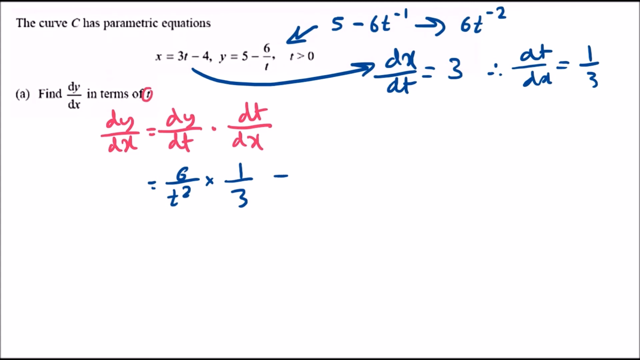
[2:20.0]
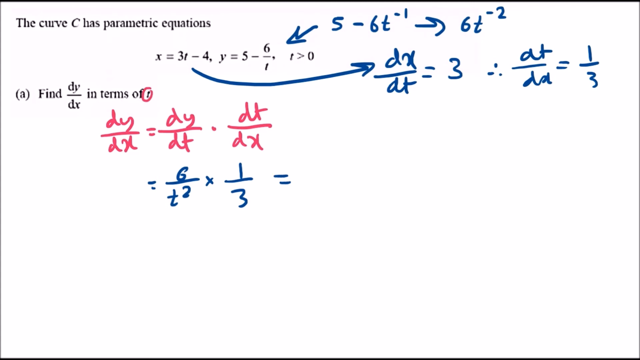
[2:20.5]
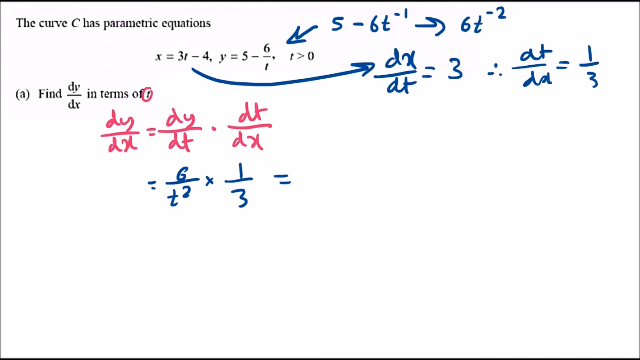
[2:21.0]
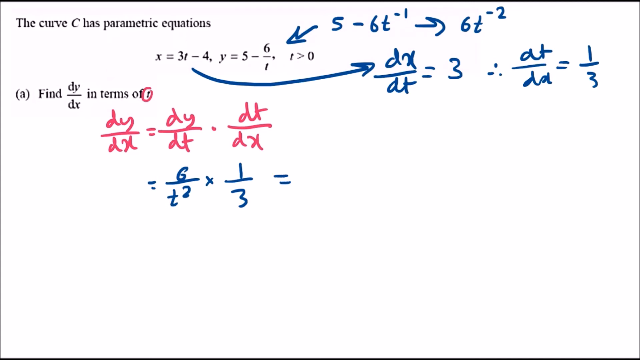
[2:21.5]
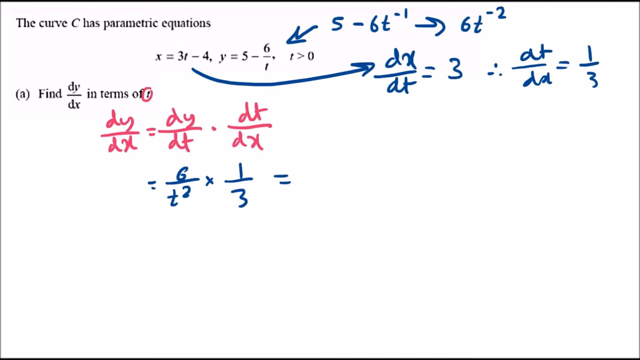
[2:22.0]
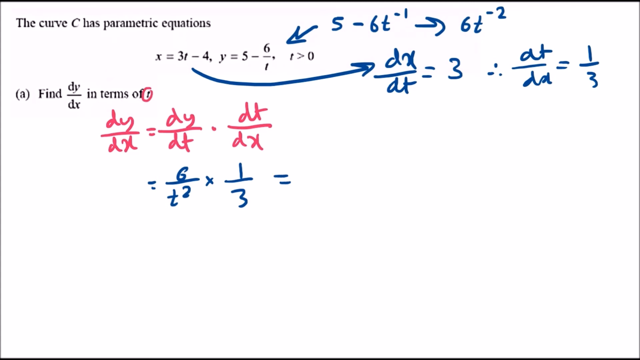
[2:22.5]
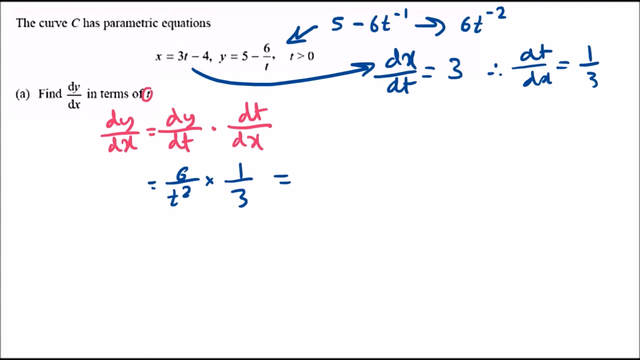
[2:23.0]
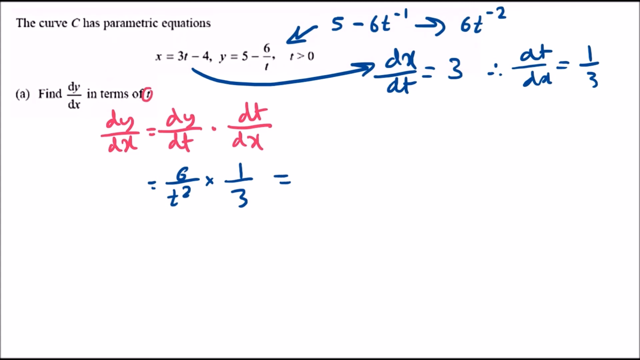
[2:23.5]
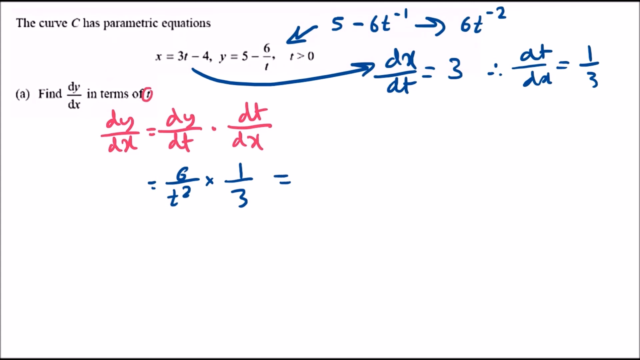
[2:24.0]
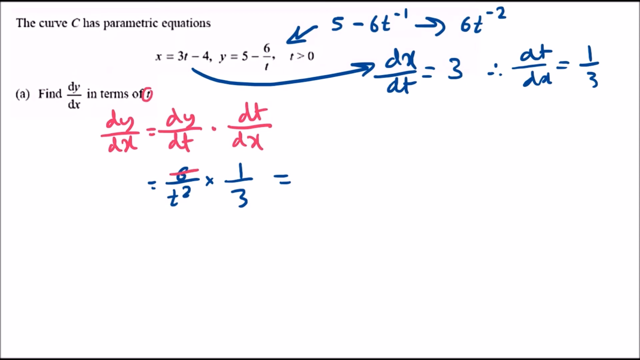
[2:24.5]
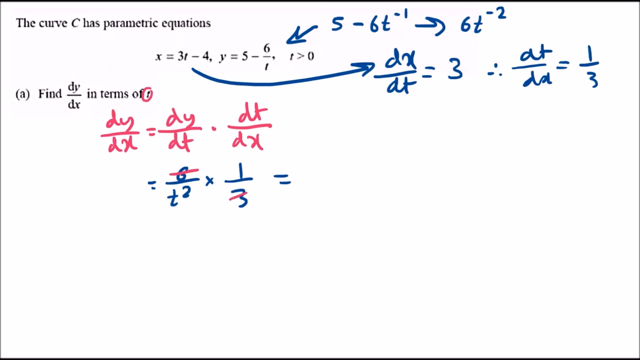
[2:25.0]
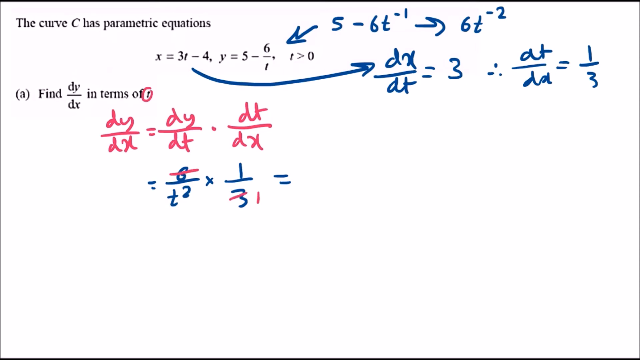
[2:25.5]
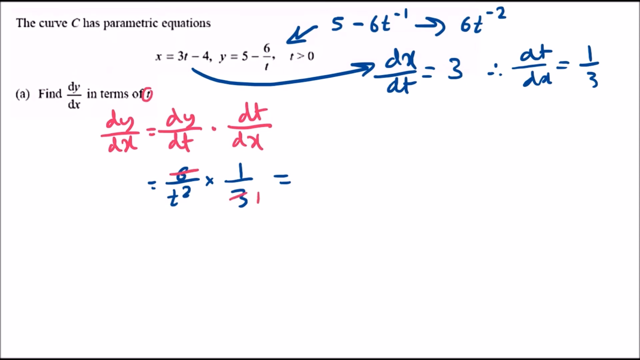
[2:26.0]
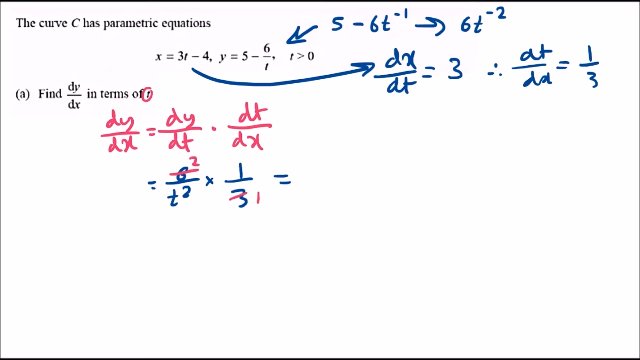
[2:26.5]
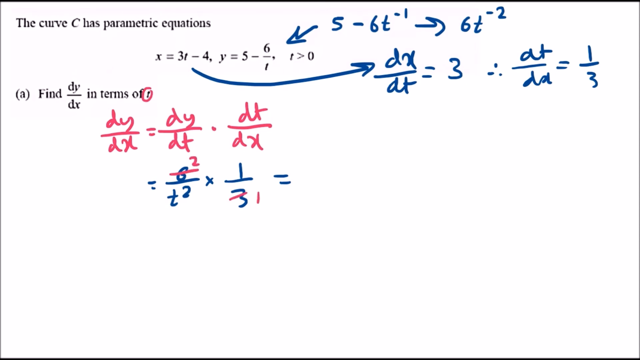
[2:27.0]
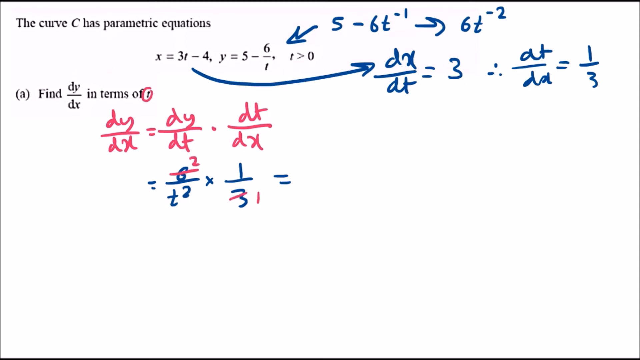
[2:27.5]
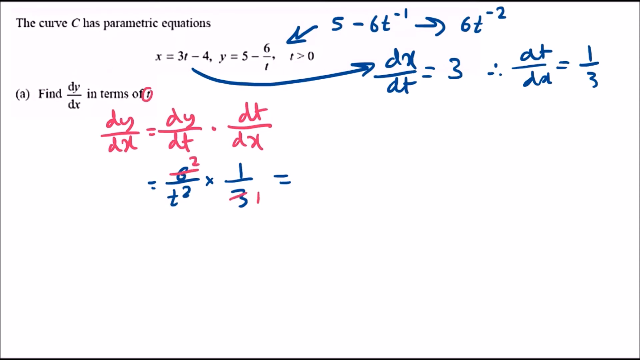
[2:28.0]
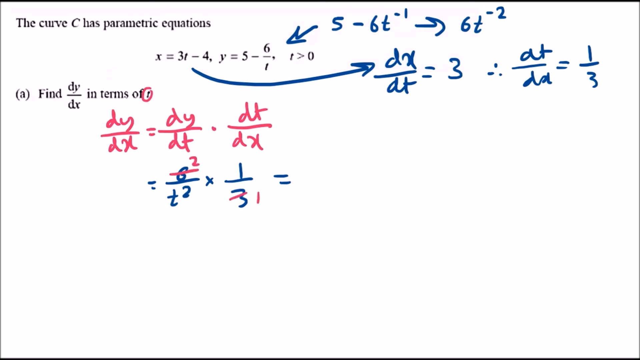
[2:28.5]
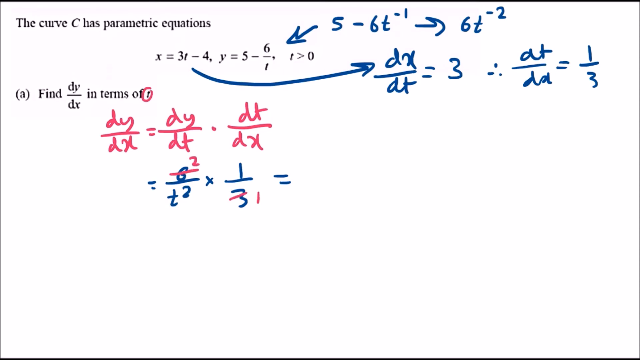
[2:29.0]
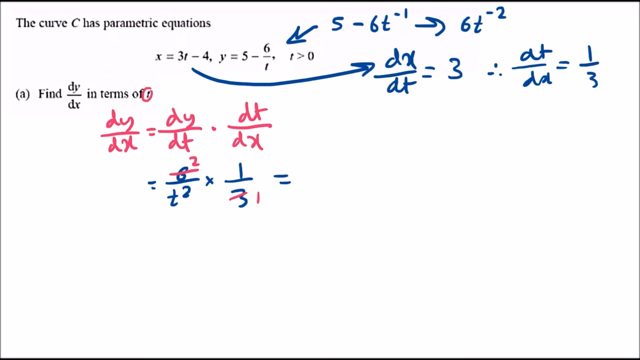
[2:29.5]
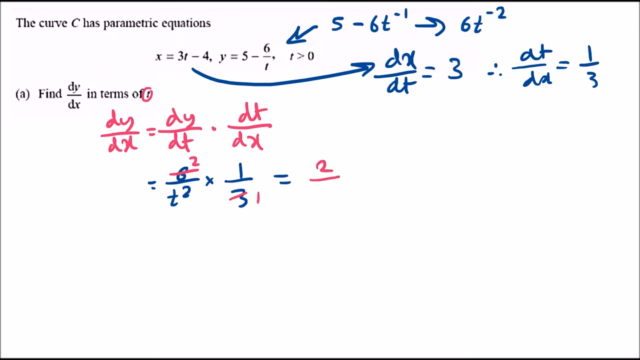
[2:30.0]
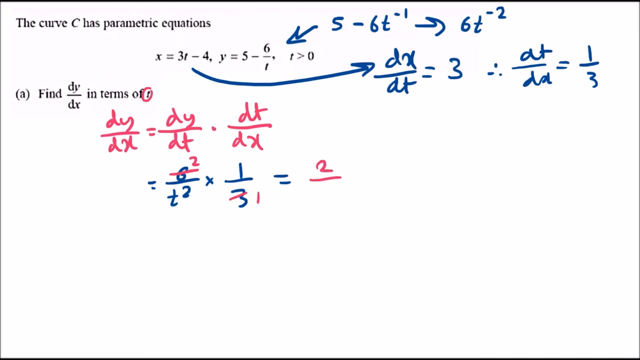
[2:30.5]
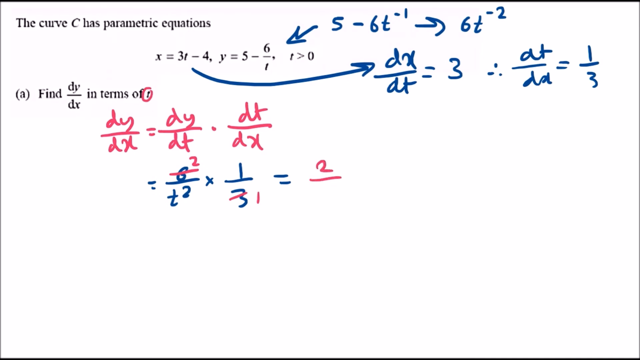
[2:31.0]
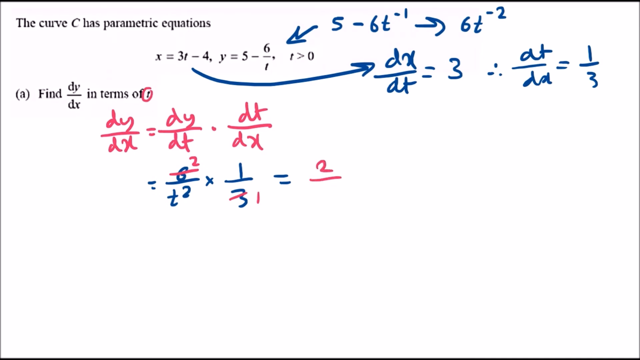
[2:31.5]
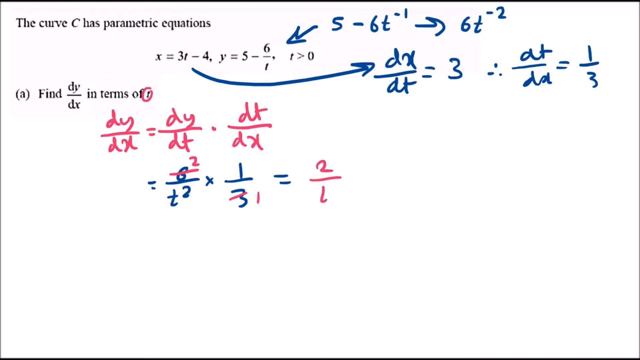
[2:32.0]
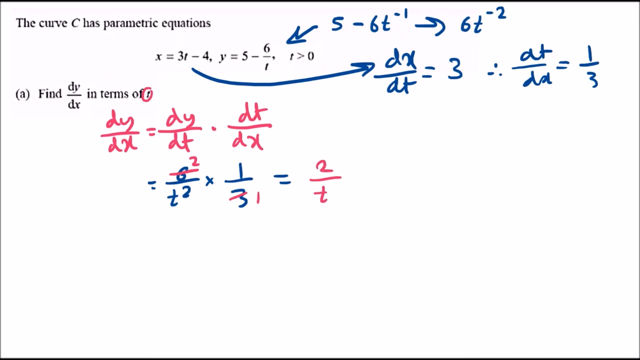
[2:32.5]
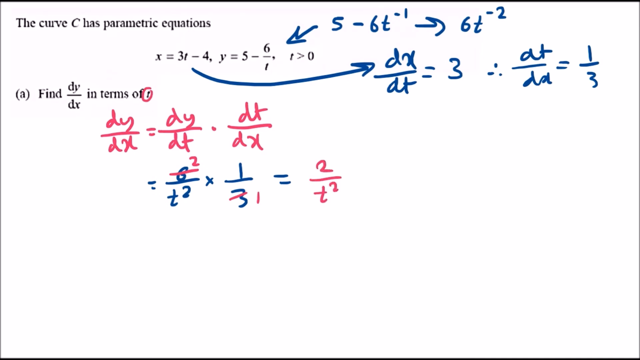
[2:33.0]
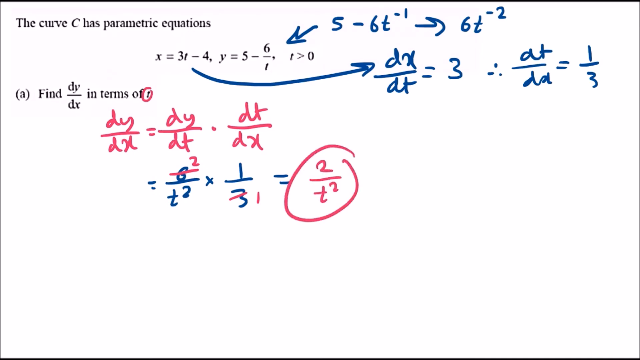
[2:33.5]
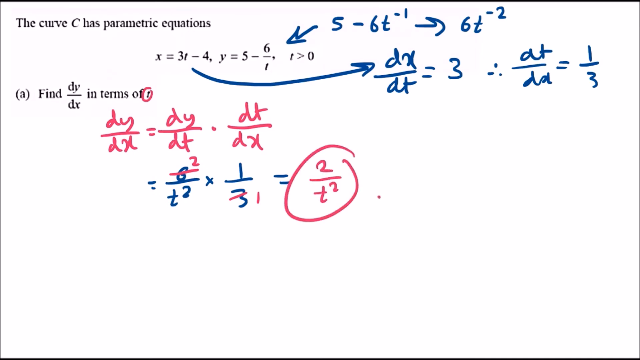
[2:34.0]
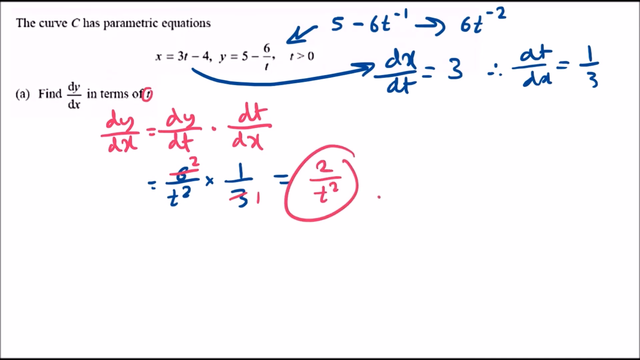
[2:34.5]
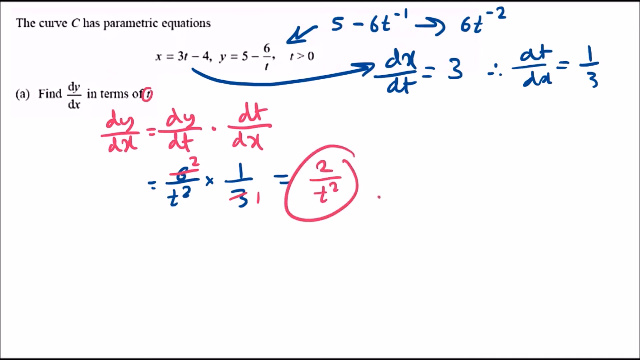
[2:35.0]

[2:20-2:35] On a white background, the question, written in black, asks to find dy over dx in terms of t and gives parametric equations for the curve C. The work already shows that dy / dx = dy / dt multiplied by dt / dx, with a number of arrows drawn from the given parametric equations to work out y and x, and working at the top of the page. The equation is filled in so that dy / dt multiplied by dt / dx equals 6 / t squared multiplied by 1 / 3. The 3 and the 6 are crossed off and replaced with a 2 and a 1. It is then written that this equals 2 over t squared, which is circled as the answer.